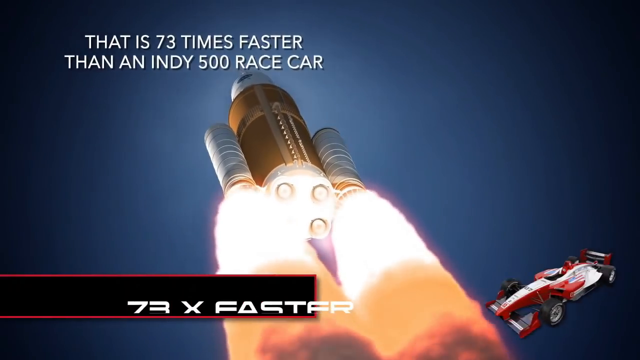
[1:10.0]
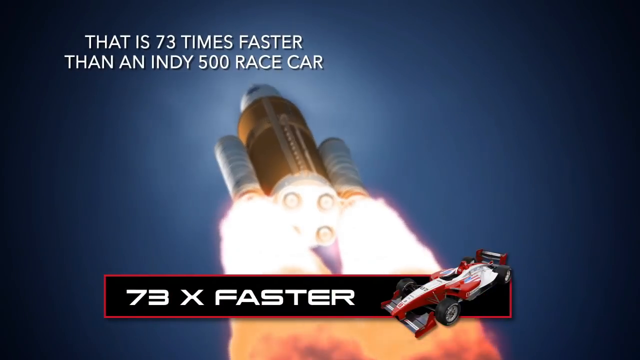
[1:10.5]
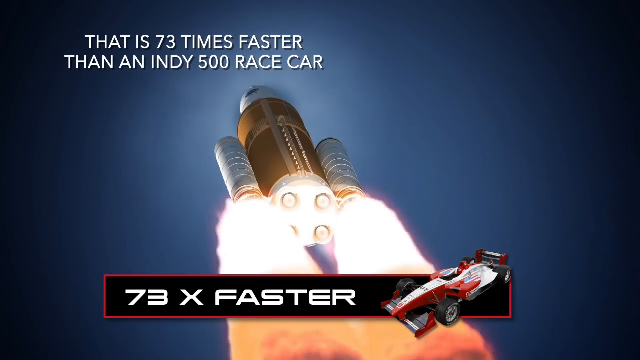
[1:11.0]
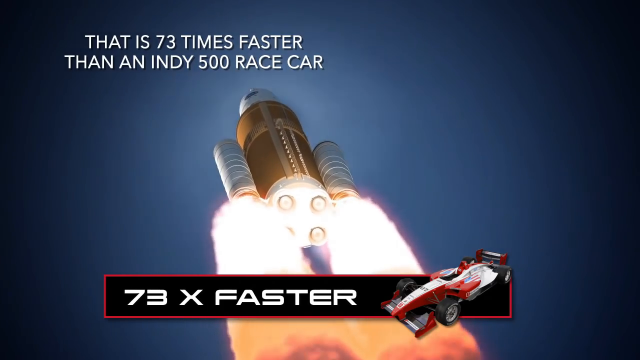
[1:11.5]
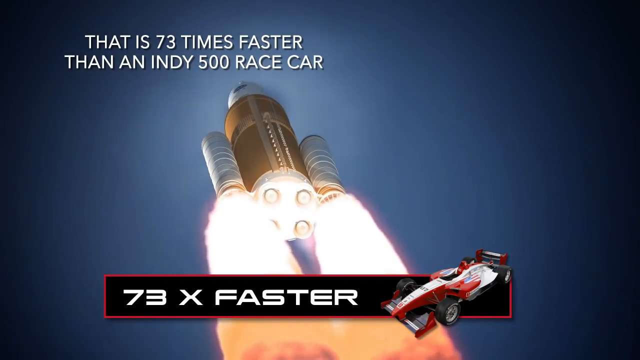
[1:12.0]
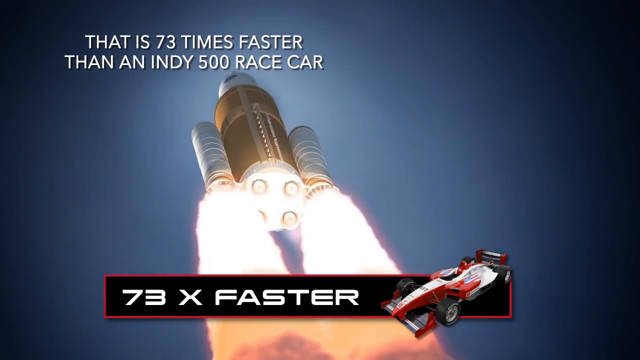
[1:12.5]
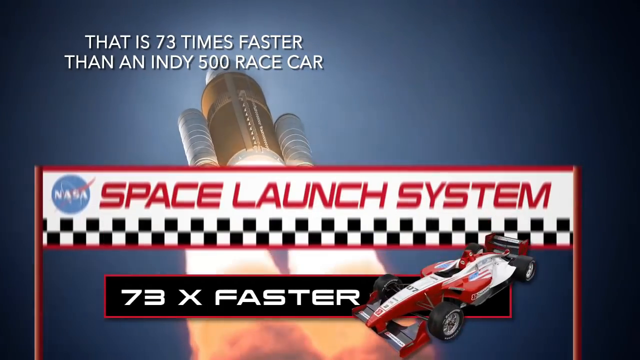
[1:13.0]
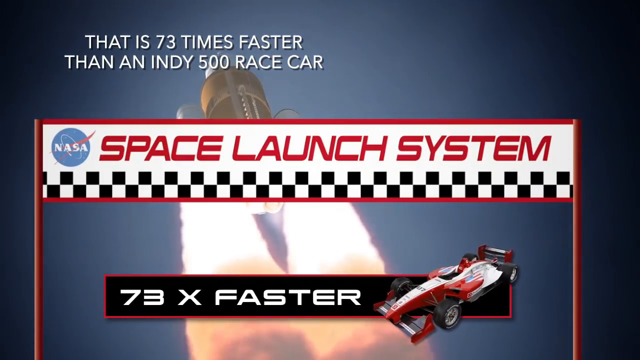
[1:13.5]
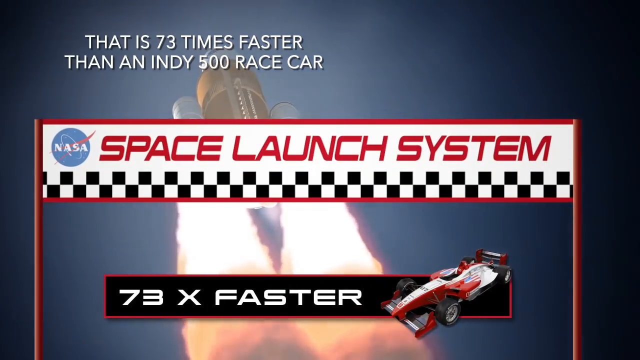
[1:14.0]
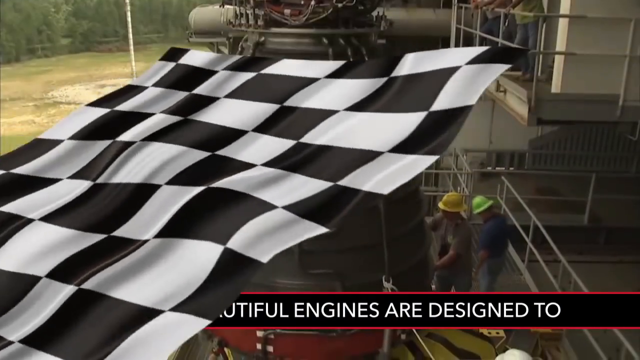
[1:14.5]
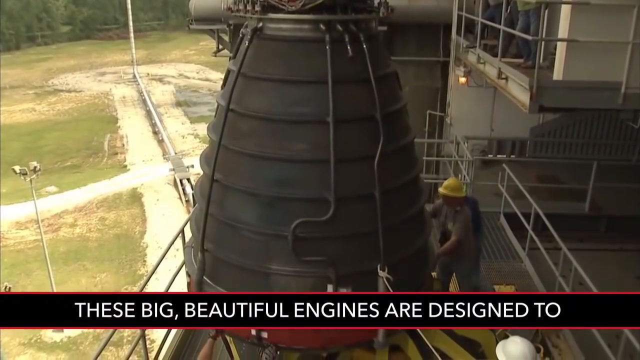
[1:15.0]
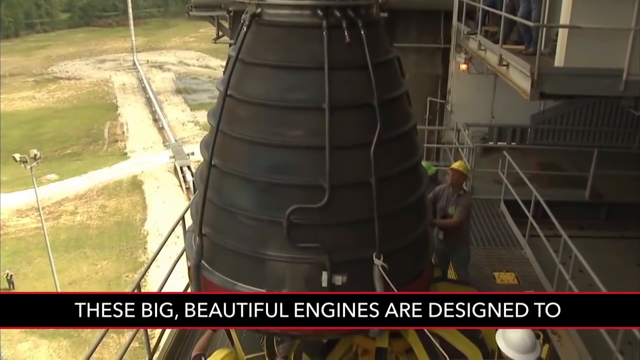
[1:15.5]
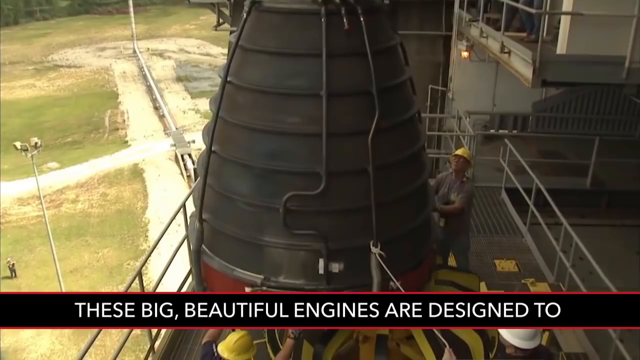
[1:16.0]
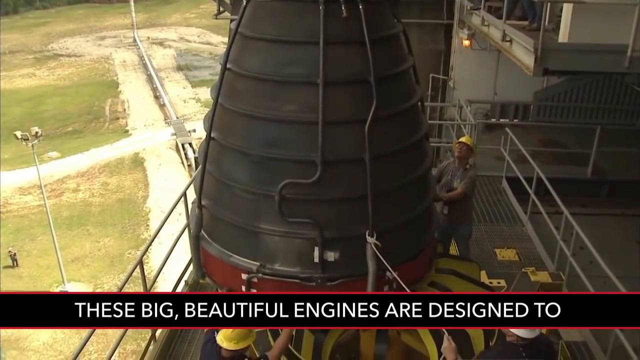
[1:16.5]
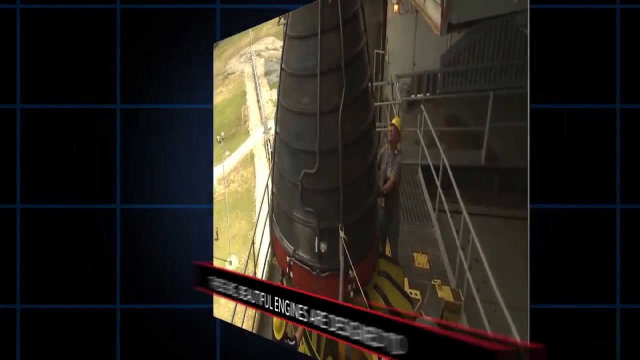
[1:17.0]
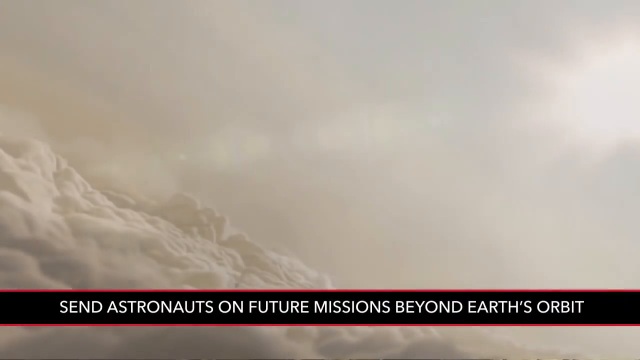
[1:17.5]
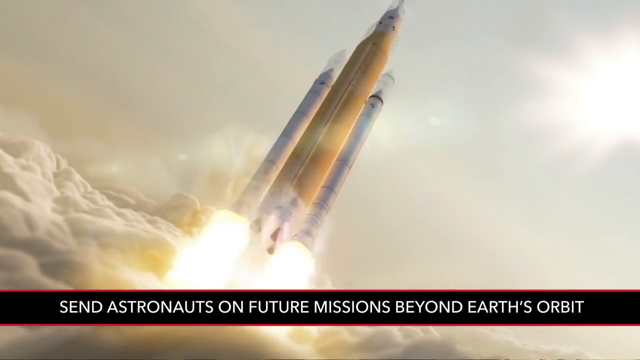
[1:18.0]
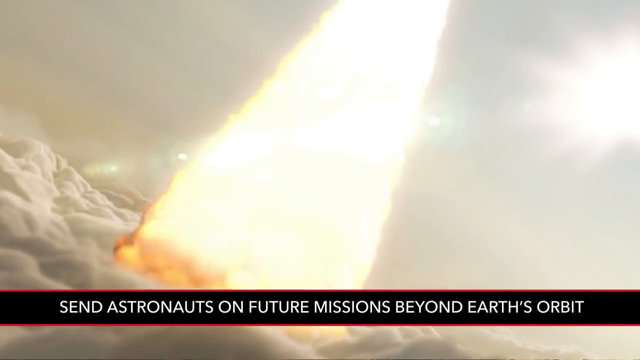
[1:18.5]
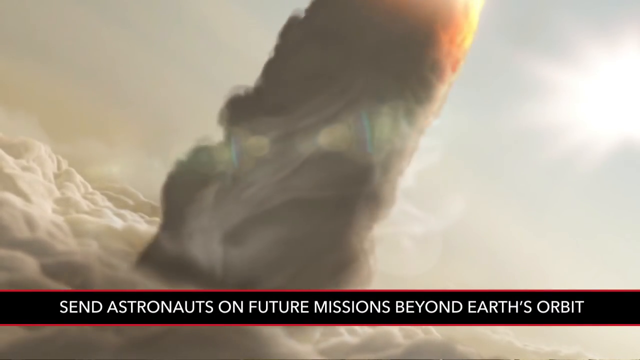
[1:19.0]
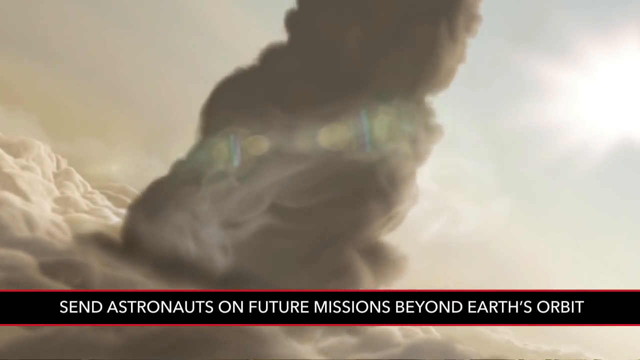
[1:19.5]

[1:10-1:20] A large orange and white rocket with a NASA logo is shown, with two smaller boosters or rockets on its sides. At the bottom right is what looks like a Grand Prix or IndyCar, red and white with black tires. White text at the bottom left reads "73 times faster," and white text at the top left reads "that is 73 times faster than an ND500 car." A finish line banner rises up with "Space Launch System" in red letters in the middle of the screen, a checkered-flag look along the bottom of the banner, and a NASA logo at its top left.